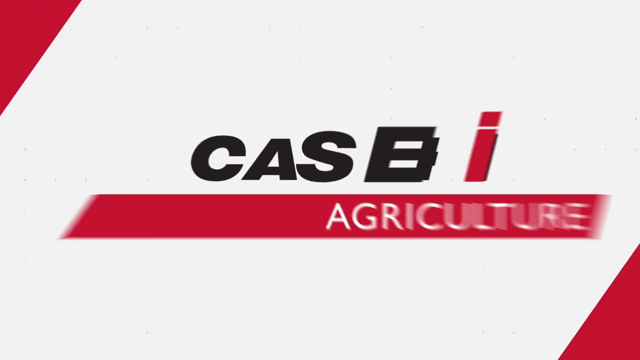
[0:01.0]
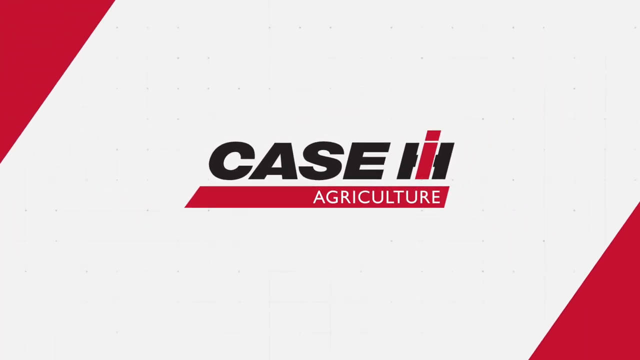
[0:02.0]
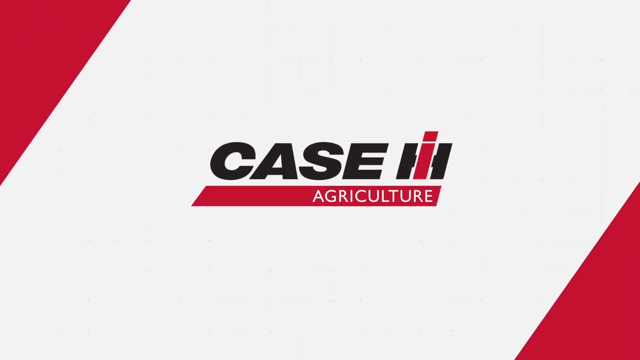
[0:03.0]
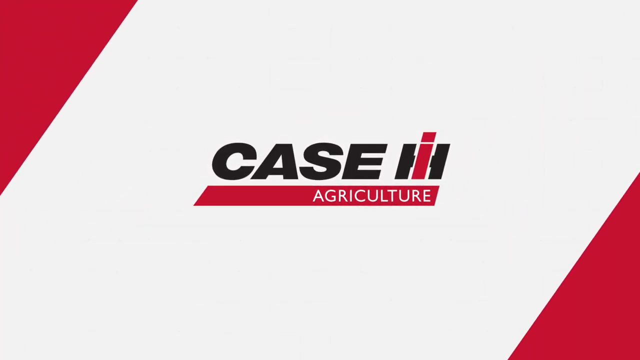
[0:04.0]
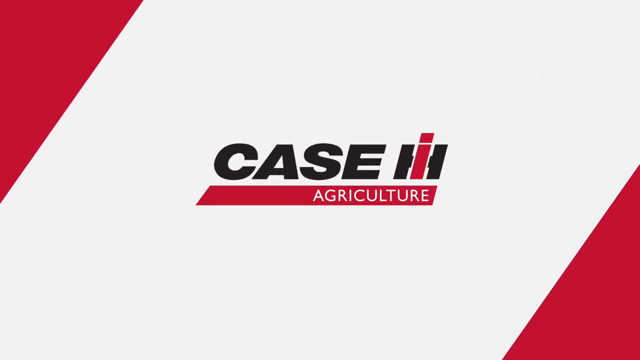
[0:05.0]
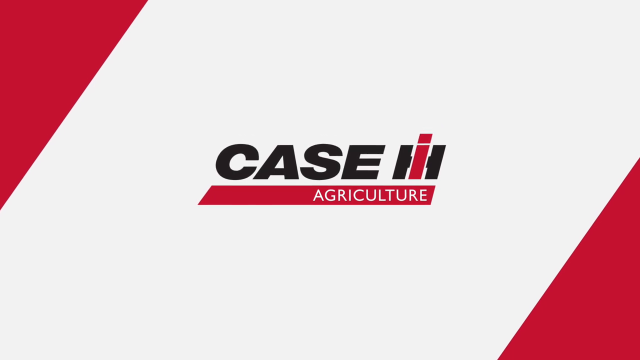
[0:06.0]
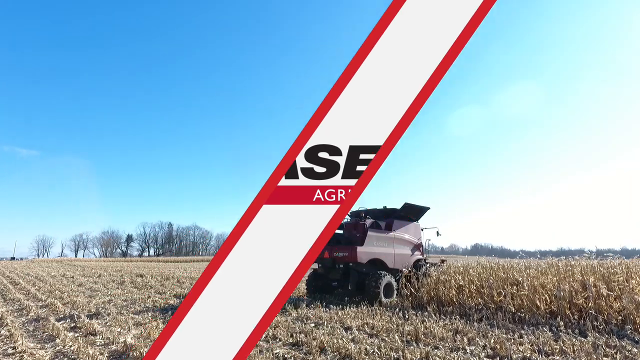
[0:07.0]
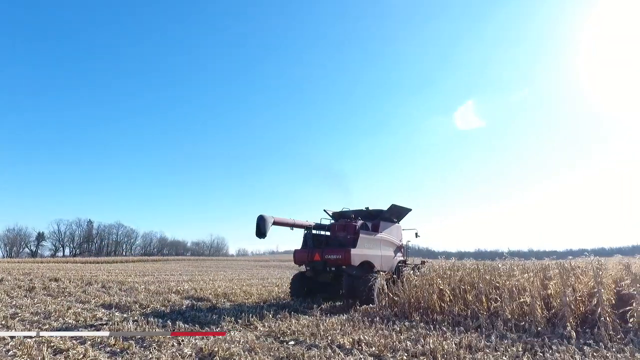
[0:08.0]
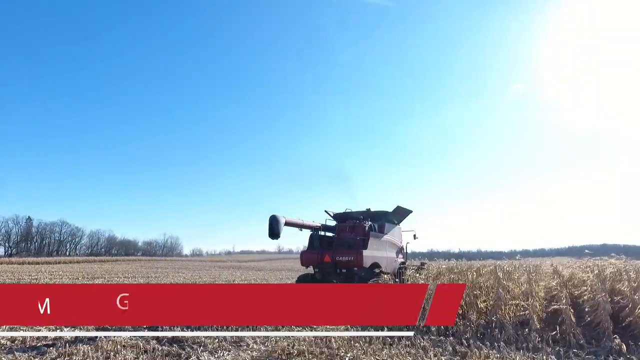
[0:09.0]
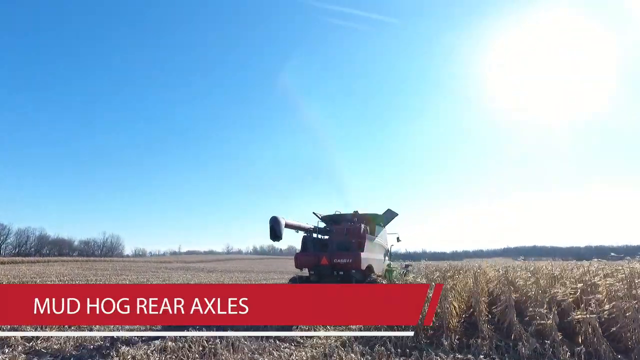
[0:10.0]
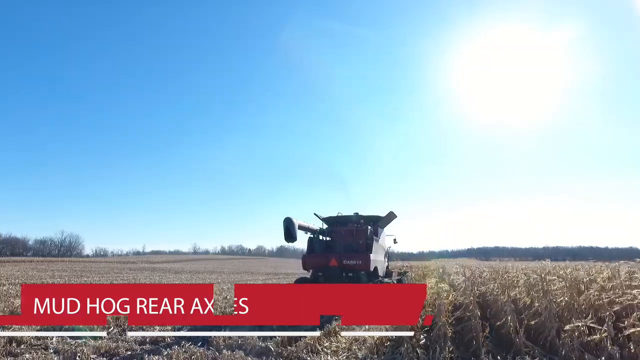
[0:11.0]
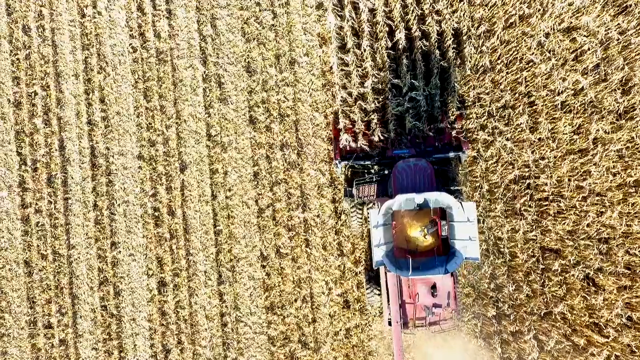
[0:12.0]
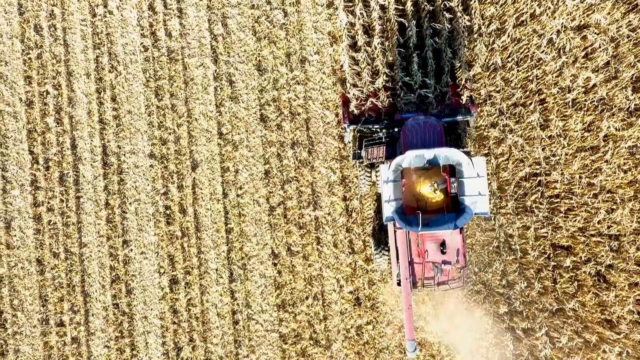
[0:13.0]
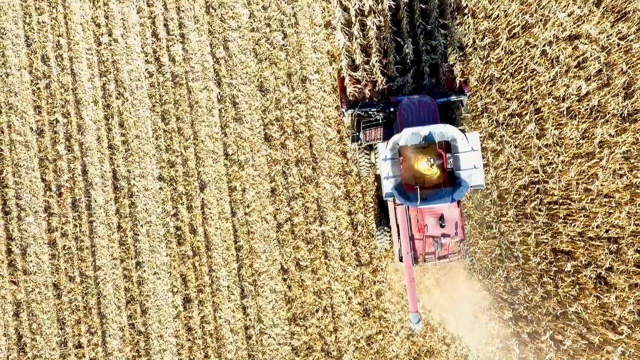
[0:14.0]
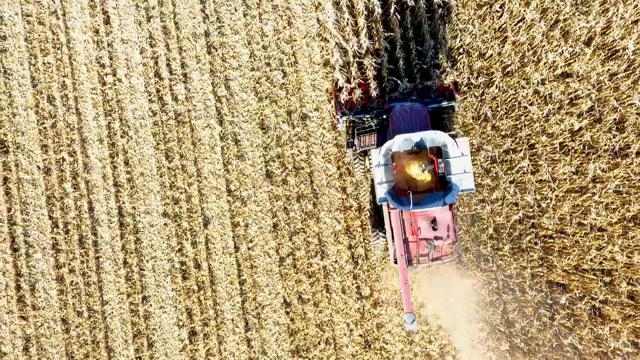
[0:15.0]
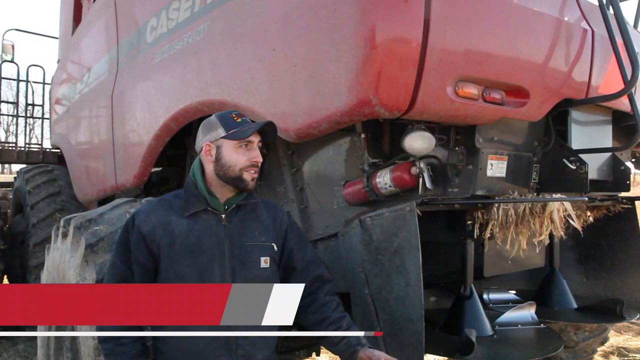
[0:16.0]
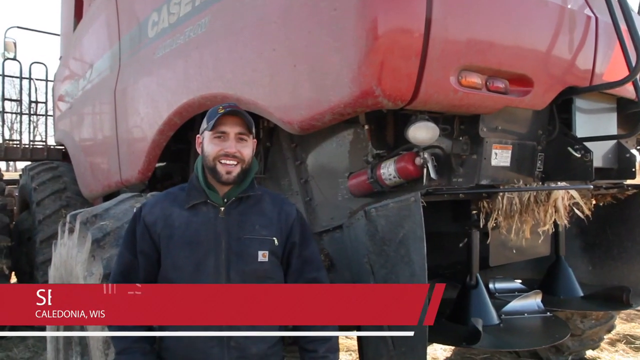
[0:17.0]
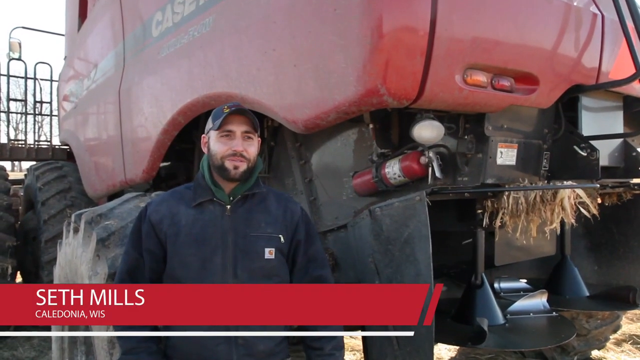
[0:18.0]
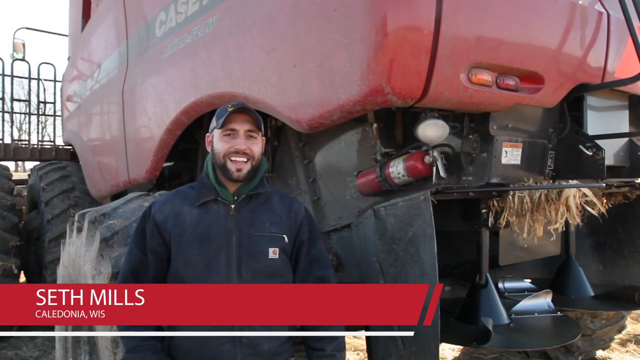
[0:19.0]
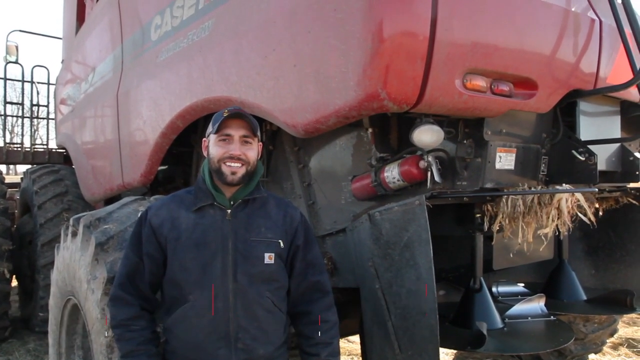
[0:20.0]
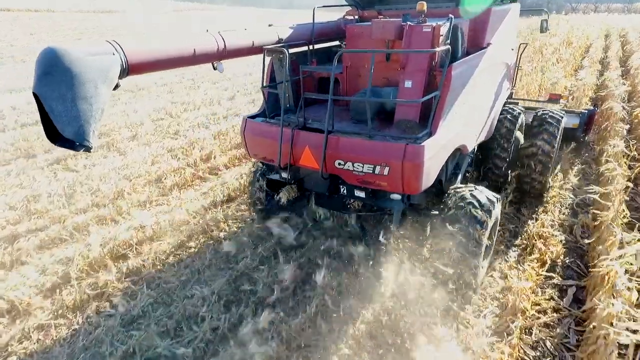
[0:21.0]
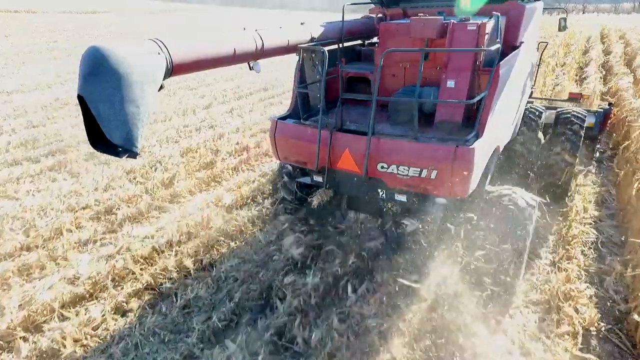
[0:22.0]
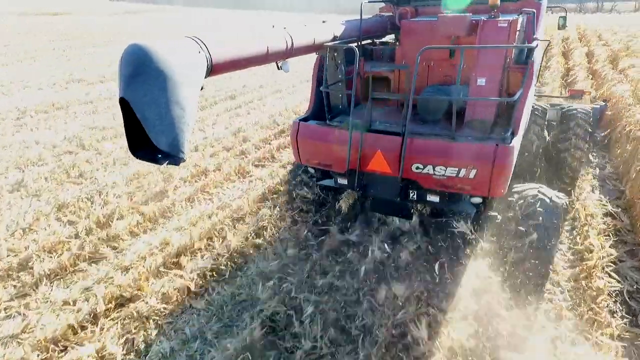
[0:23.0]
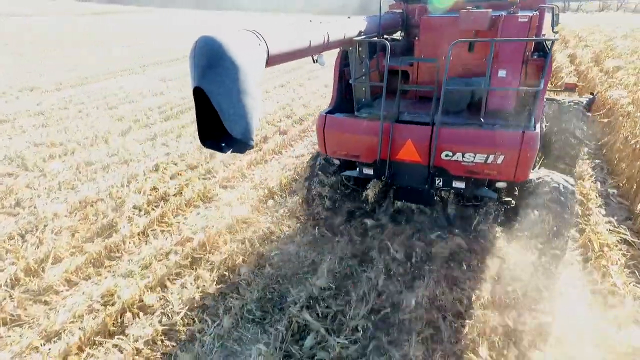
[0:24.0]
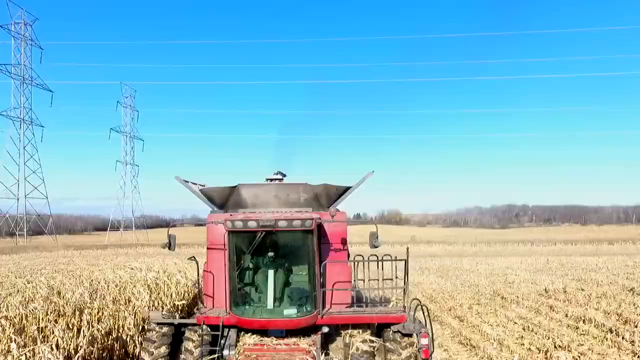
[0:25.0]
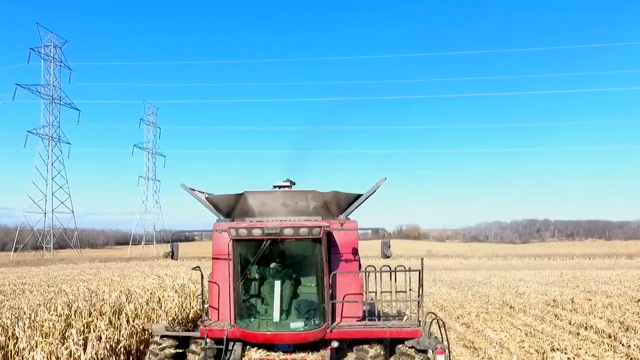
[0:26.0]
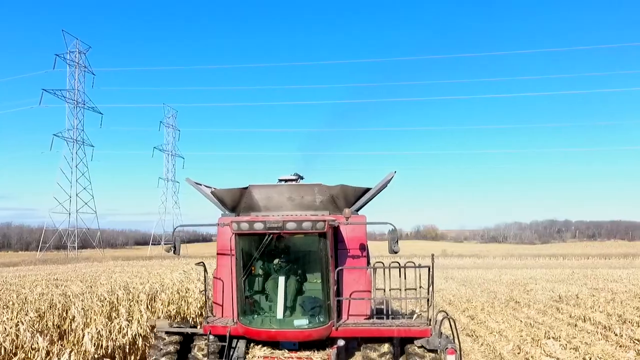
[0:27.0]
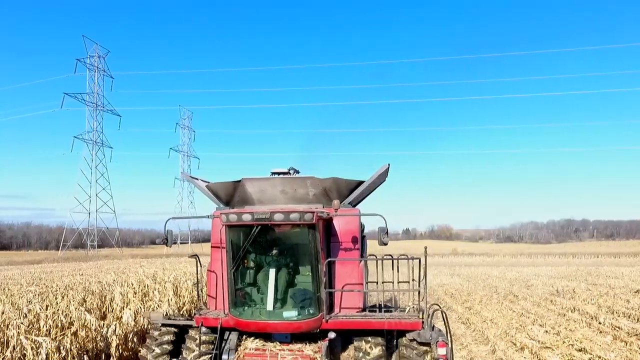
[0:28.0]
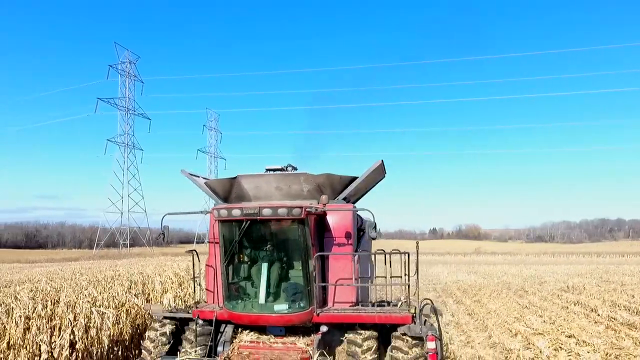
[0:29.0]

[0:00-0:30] The video opens on a white background with a red triangle in the top right corner and another red triangle in the bottom right, so the corners of the screen look somewhat shaded in red. In the middle, black block lettering reads "CASE" in all capitals, followed by a black H with a red lowercase i on top of it. Underneath is a red banner with the word "agriculture" in white across it. This screen stays for a few seconds before the video moves outside to a farm scene: a large field during the daytime under a blue sky with a few clouds. On the left side of the screen, the field looks somewhat plowed, very flat and short, while on the right side there are tall stalks of grain. Something like a tractor is in the middle of the screen. In the bottom left corner, a red banner shows the words "MUDHOG REAR AXLES" in all-capital white lettering. The camera then shows a top-down bird's-eye view, with the field tilled on the left and somewhat raw on the right. Next, a man, Seth Mills, is talking; he is standing somewhat to the side of the tractor and wears a jacket, a hood and a hat.